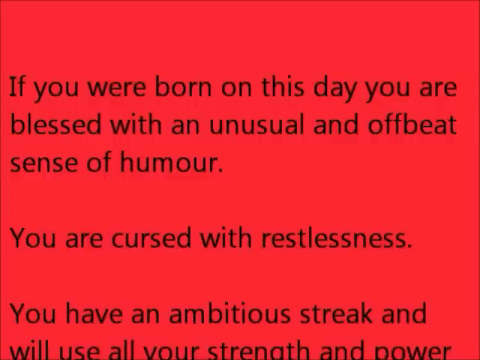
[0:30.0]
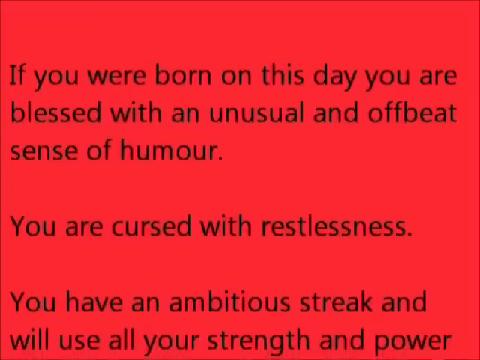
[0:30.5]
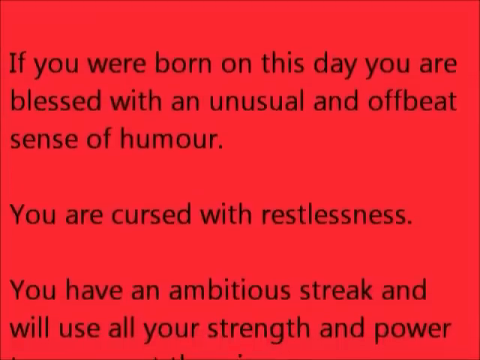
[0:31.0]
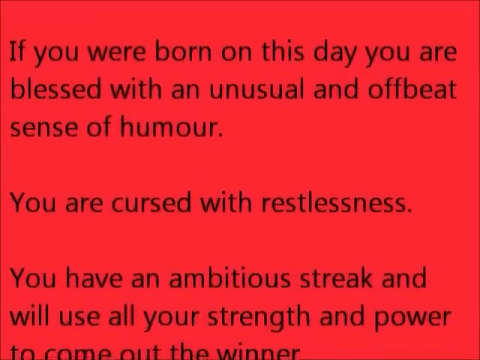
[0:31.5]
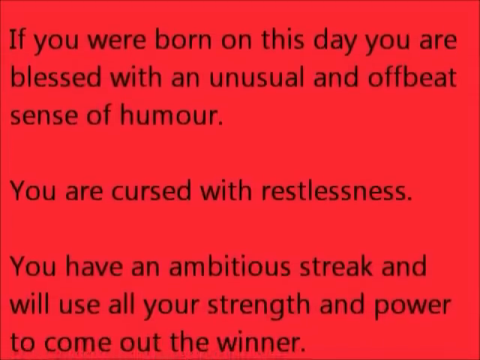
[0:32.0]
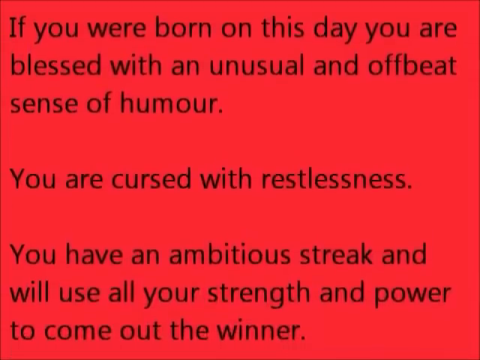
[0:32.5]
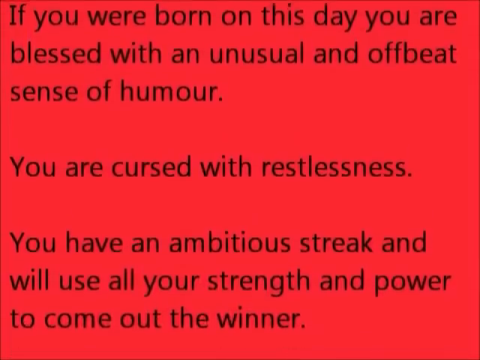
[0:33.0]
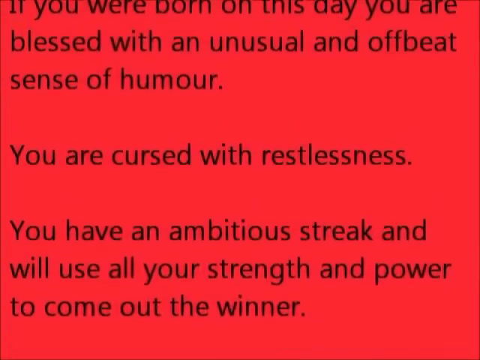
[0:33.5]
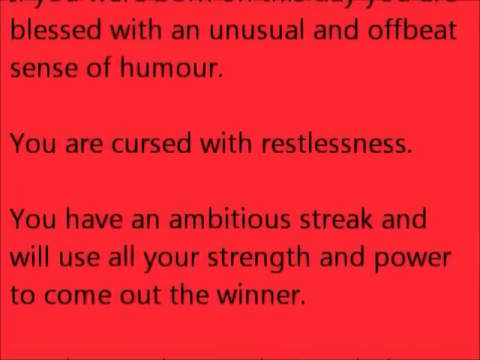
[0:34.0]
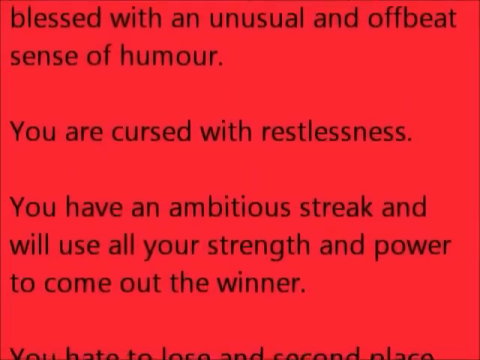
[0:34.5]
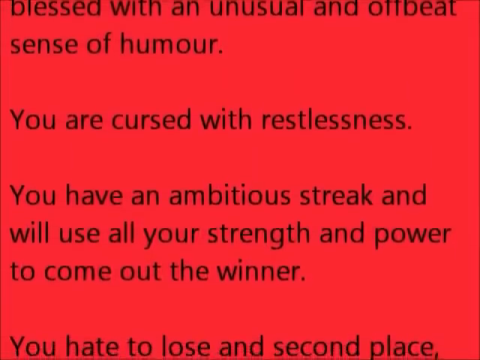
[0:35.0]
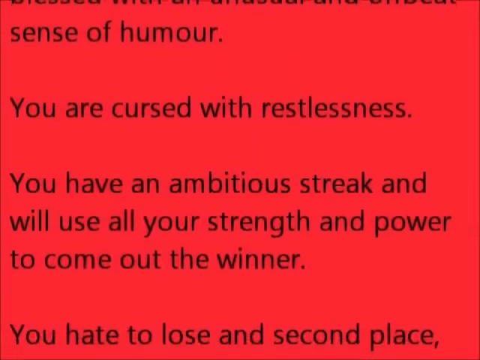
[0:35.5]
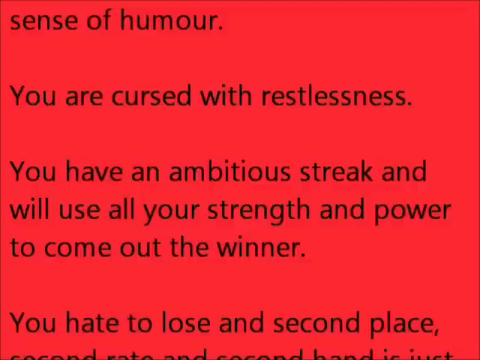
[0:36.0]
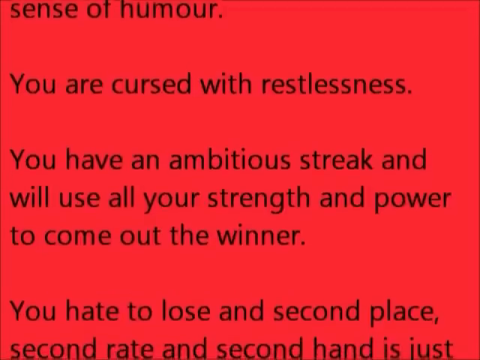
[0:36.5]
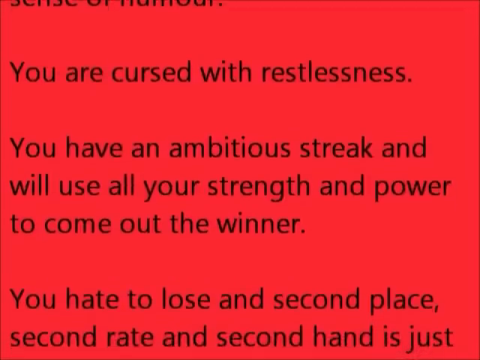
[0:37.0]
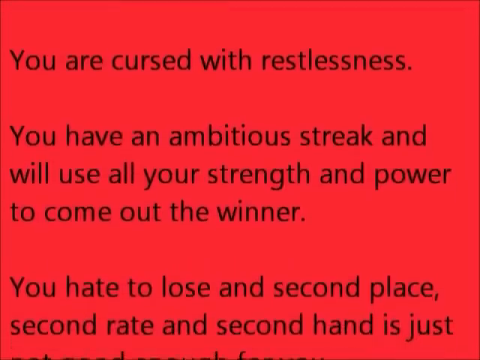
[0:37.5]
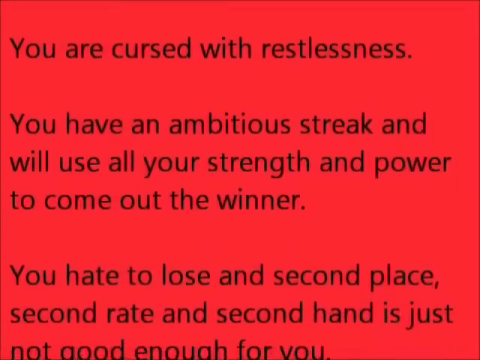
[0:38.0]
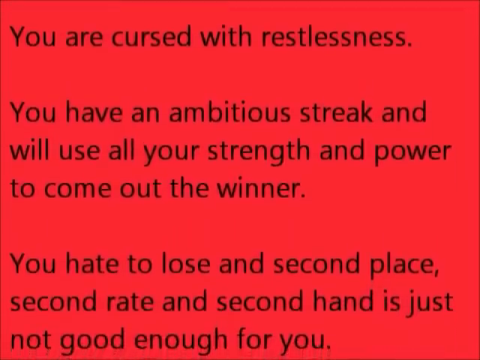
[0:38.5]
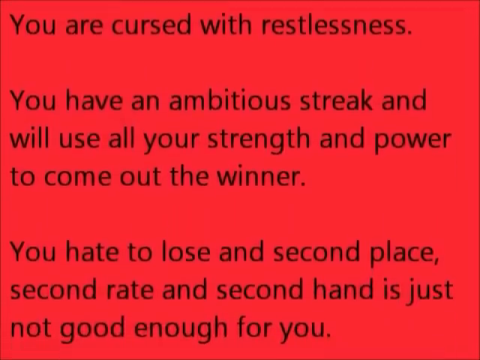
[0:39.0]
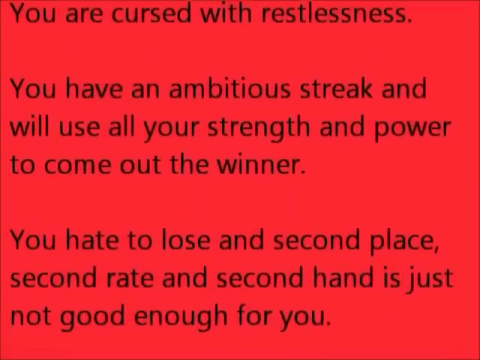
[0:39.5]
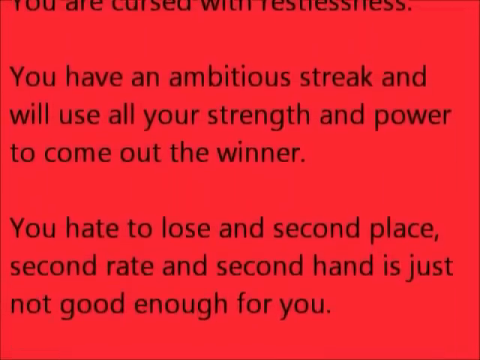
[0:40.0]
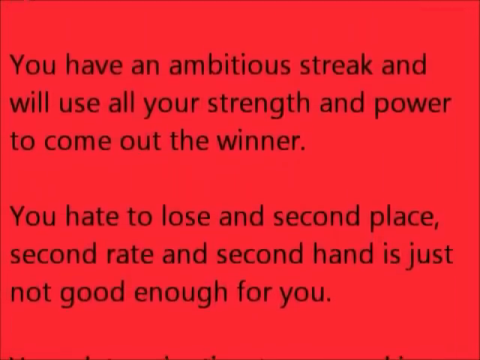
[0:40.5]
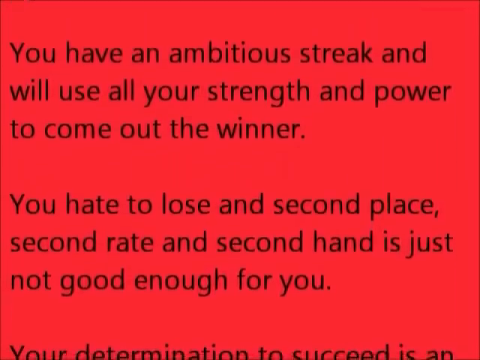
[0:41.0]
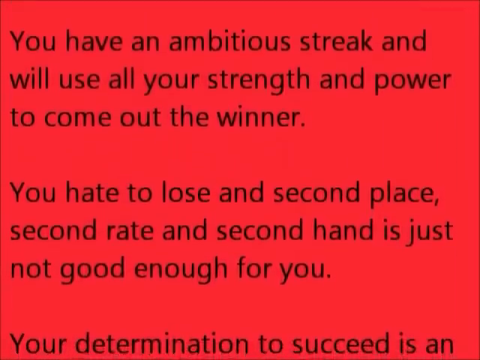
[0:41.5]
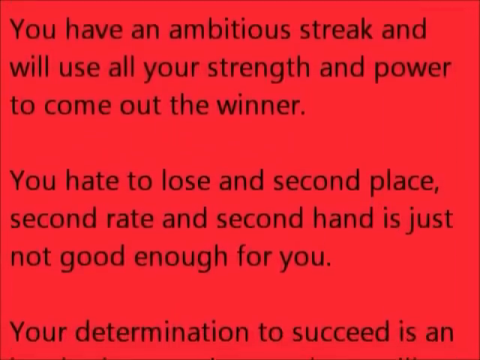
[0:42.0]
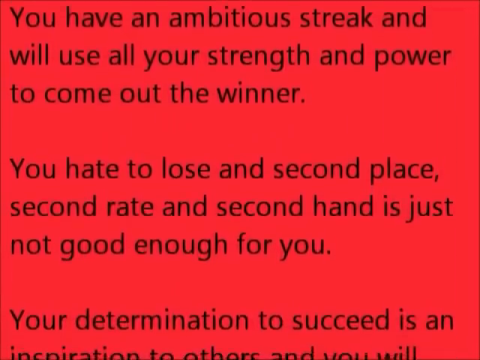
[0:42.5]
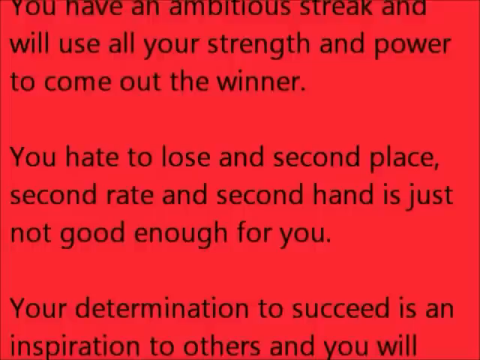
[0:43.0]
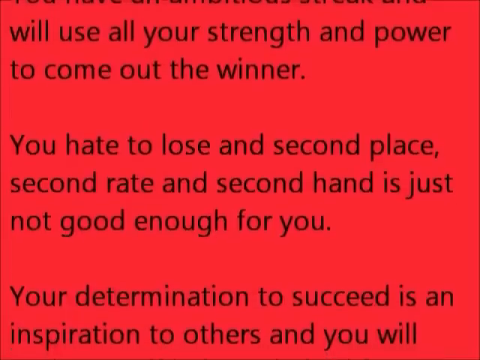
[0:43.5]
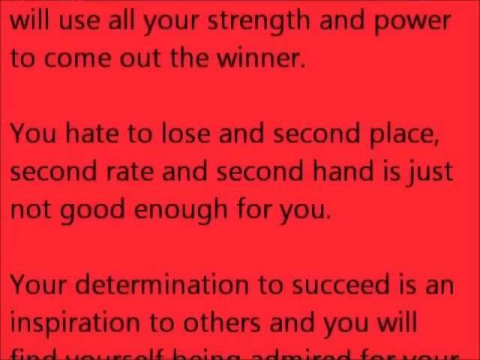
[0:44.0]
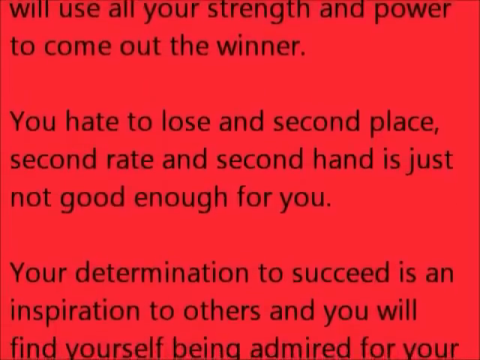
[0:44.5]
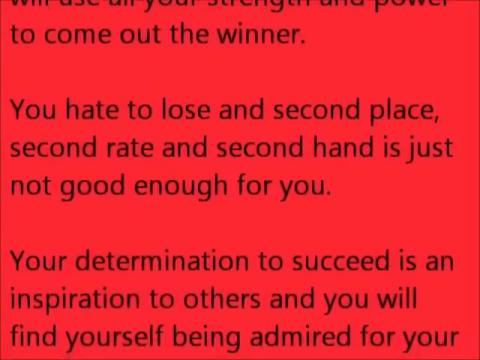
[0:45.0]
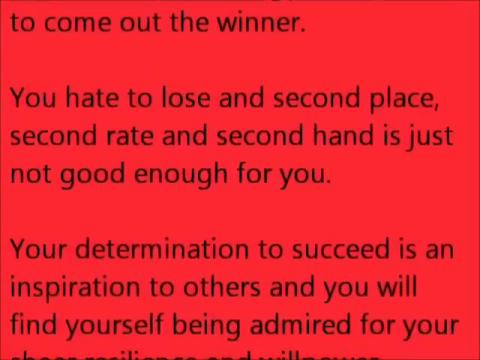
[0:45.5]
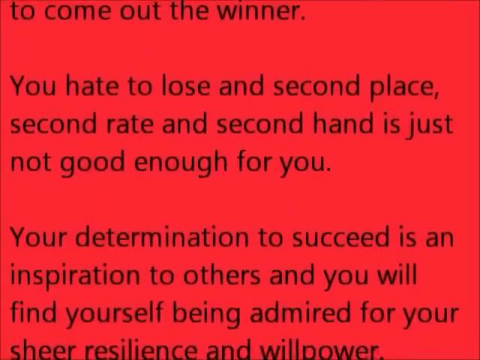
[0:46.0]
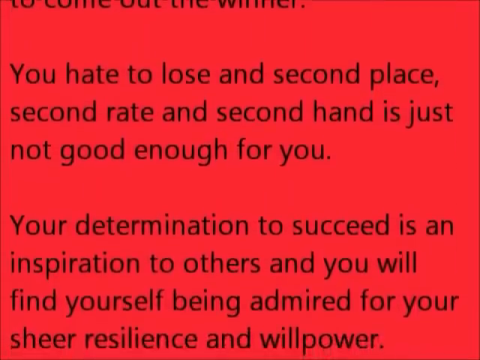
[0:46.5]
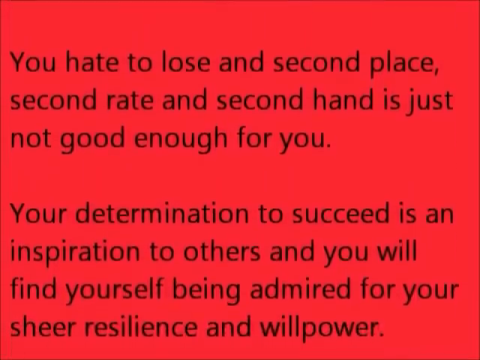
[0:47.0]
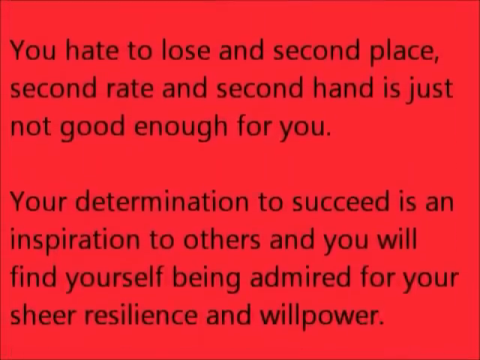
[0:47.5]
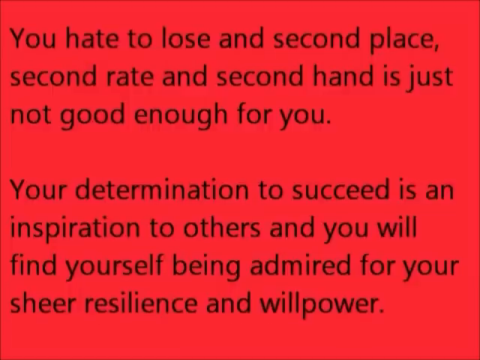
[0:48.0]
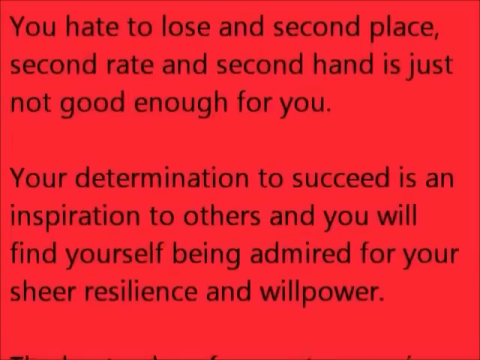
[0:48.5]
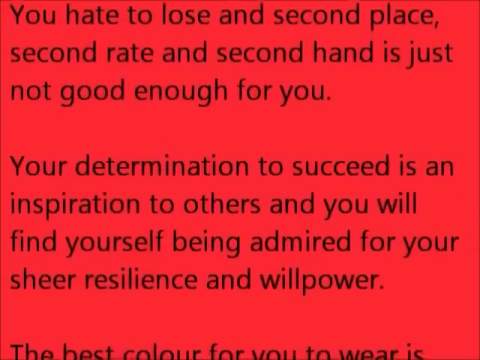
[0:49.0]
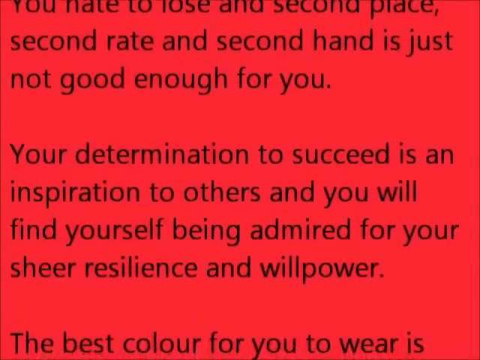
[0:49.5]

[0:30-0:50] The red background continues, with text written in black. It reads "You are cursed with restlessness. You have an ambitious streak and will use all your strength and power to come out the winner," and continues "Second rate and second hand is just not good enough for you. Your determination to succeed is an inspiration to others and you will find yourself being admired for your sheer resilience and willpower." The black message scrolls from the bottom upward over the red background, and on closer look the words appear a bit blurry. The words appear to be the psychic's message based on one's birthday.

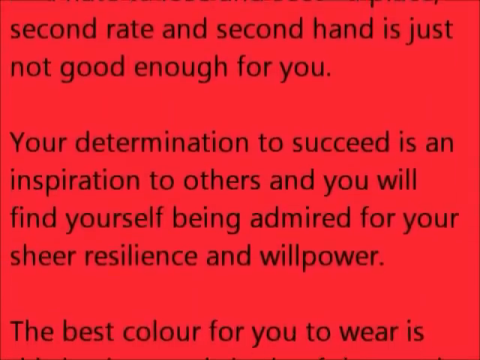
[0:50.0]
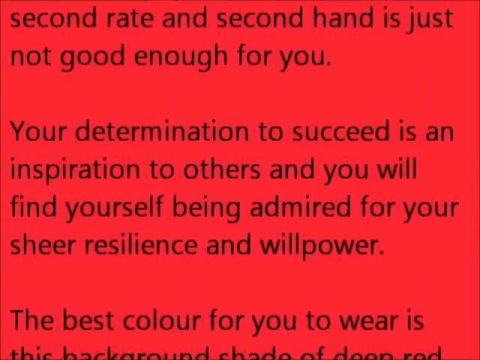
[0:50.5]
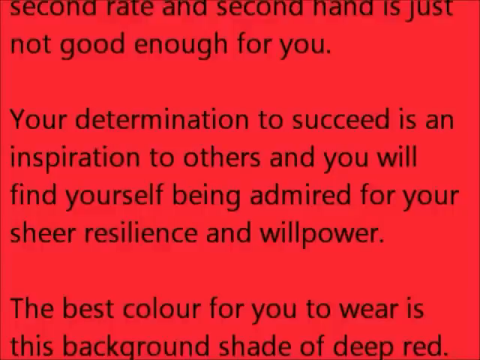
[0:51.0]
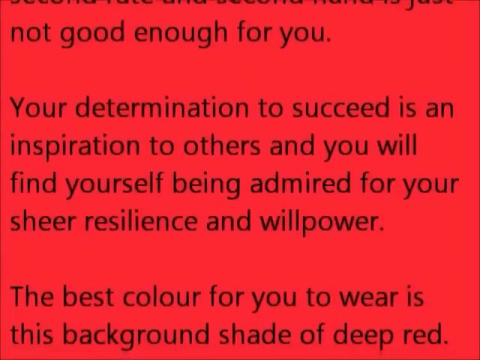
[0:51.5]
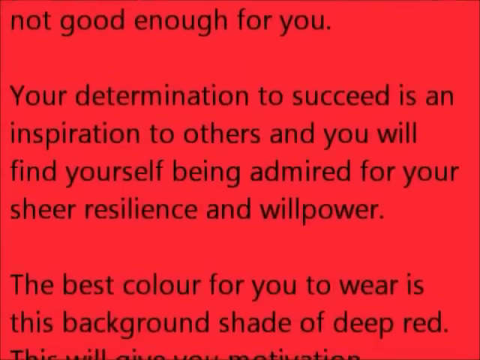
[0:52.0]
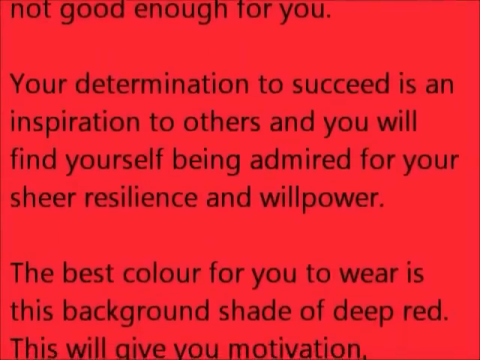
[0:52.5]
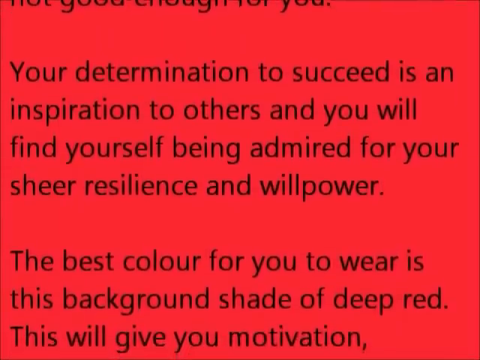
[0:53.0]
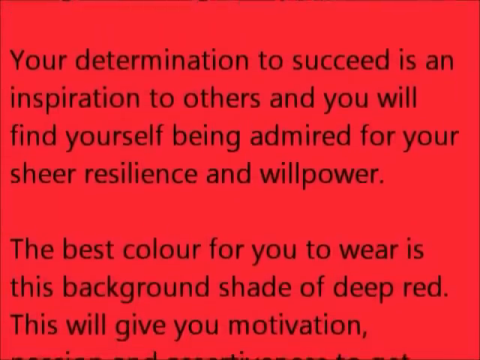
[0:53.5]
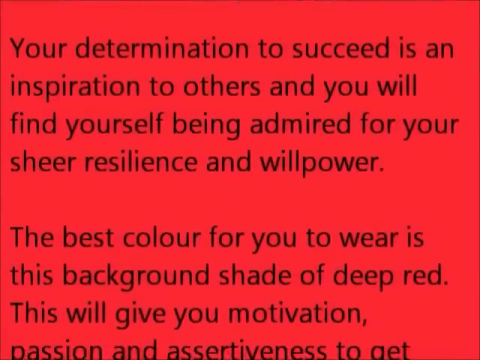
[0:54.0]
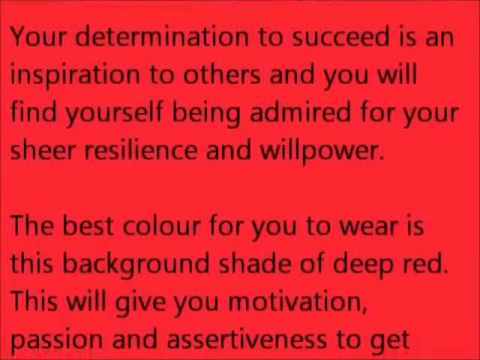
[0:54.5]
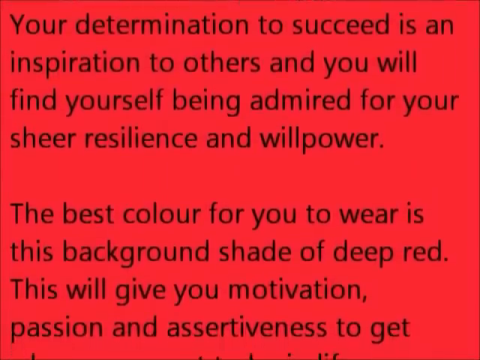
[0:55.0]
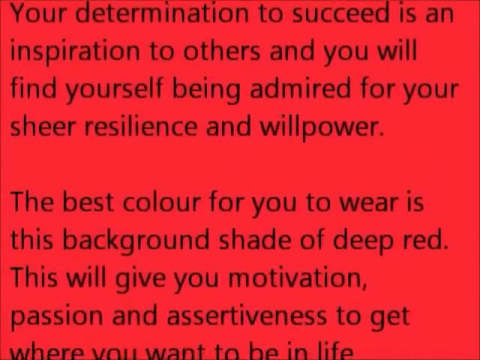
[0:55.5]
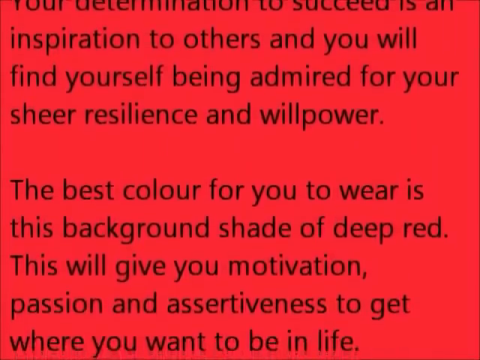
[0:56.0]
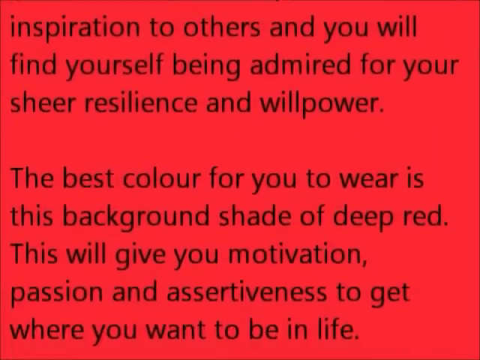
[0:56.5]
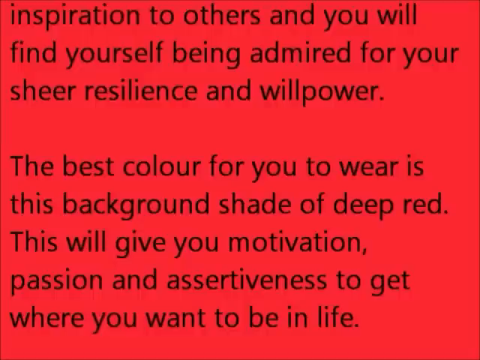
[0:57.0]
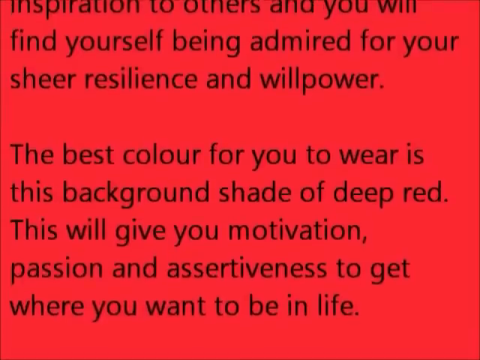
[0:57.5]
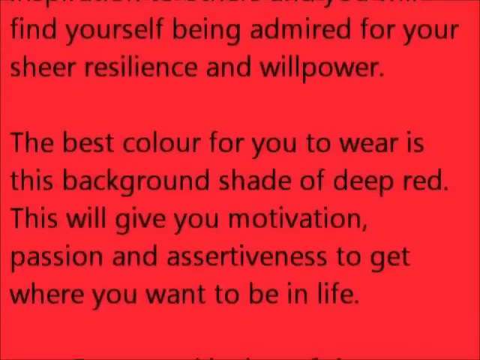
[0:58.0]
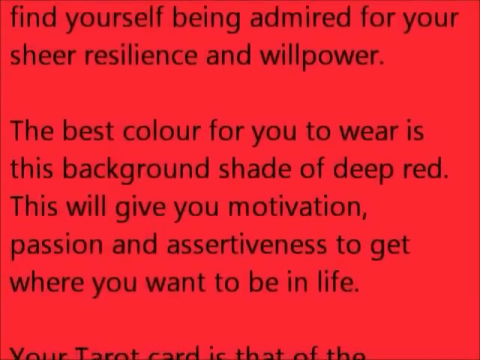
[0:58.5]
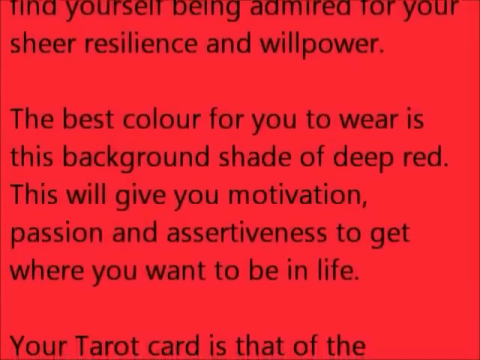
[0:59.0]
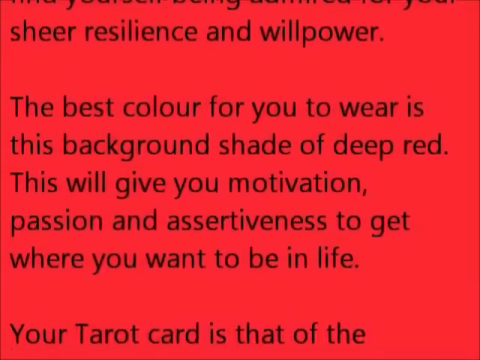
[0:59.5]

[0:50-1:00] The red background continues as more words appear on the screen. The text says "the best color for you to wear is this background shade of deep red this will give you motivation passion and assertiveness to get where you want to be in life." The message keeps scrolling from the bottom upward; as it says, the background is deep red, and the message is written in black.